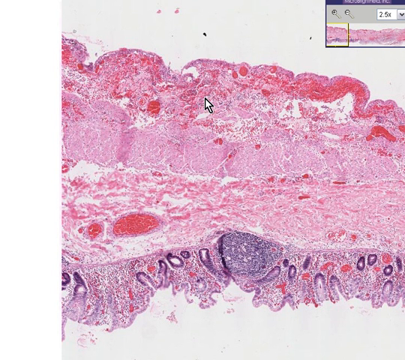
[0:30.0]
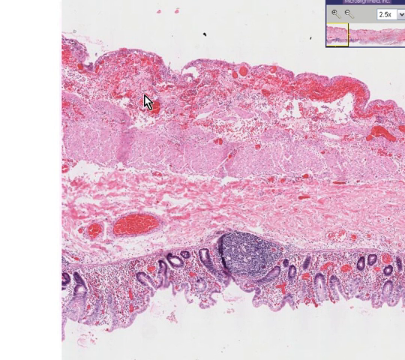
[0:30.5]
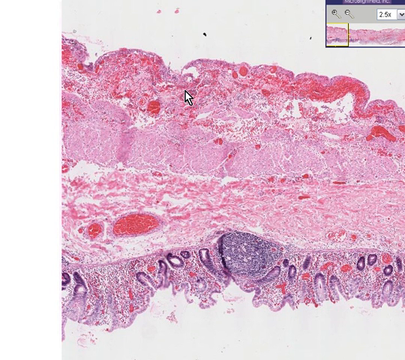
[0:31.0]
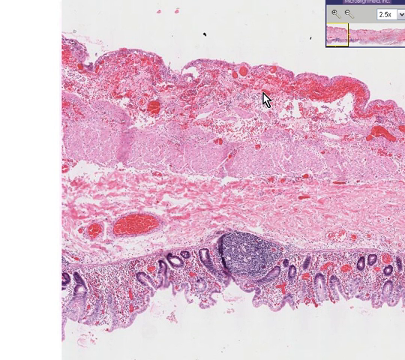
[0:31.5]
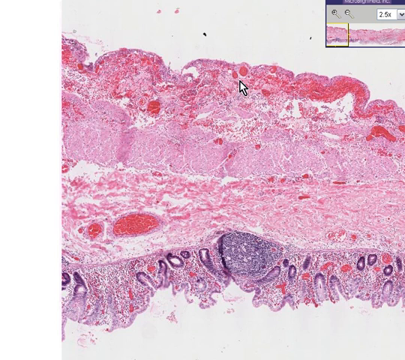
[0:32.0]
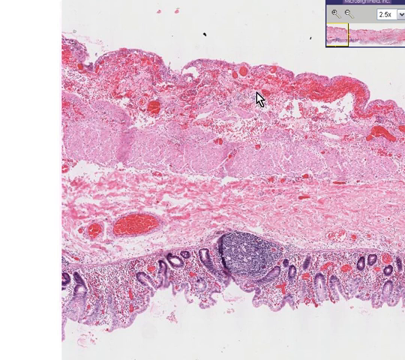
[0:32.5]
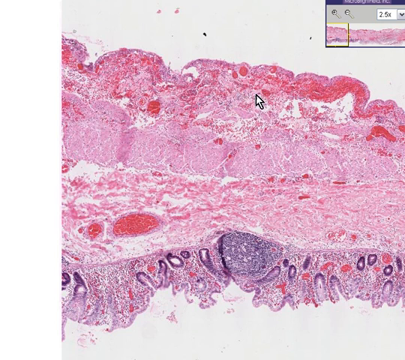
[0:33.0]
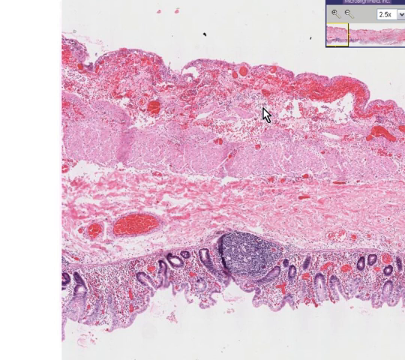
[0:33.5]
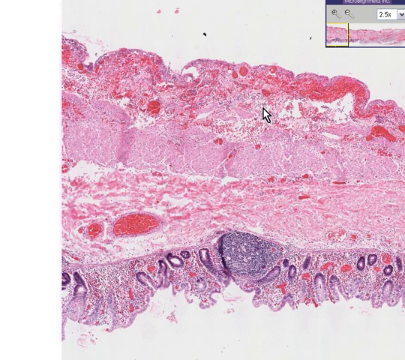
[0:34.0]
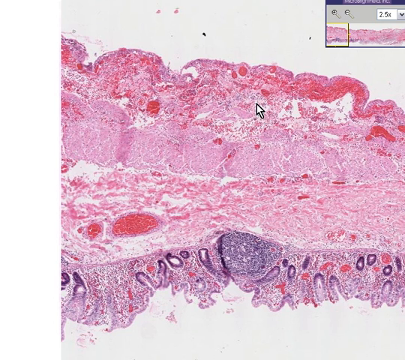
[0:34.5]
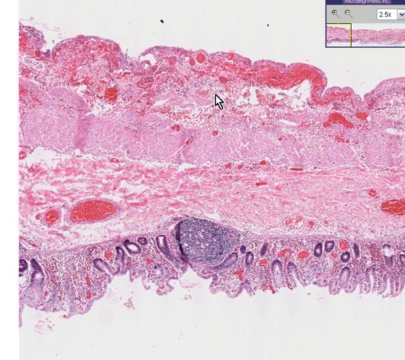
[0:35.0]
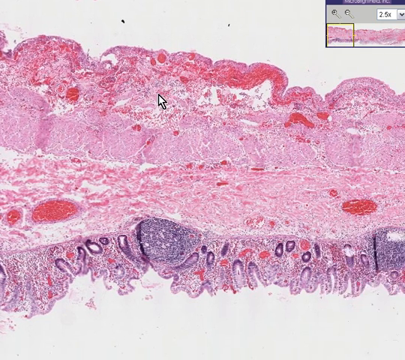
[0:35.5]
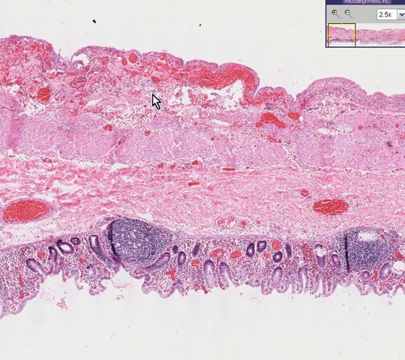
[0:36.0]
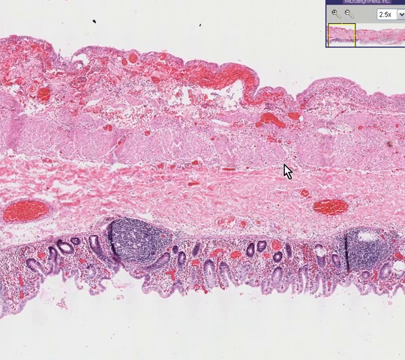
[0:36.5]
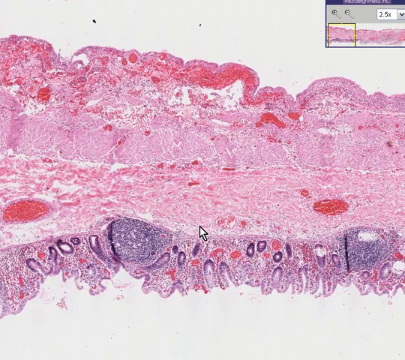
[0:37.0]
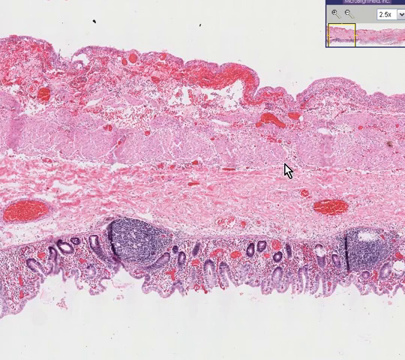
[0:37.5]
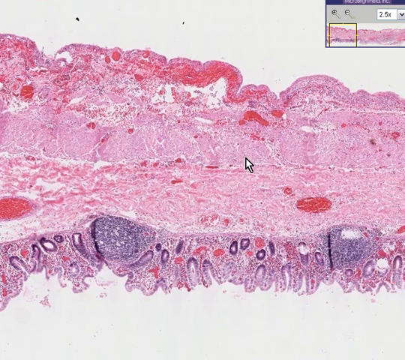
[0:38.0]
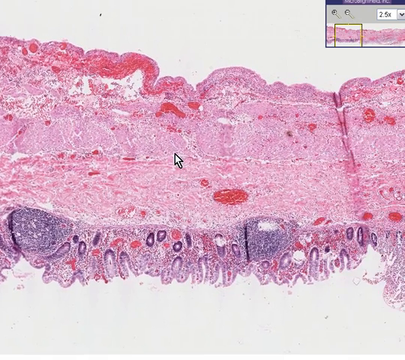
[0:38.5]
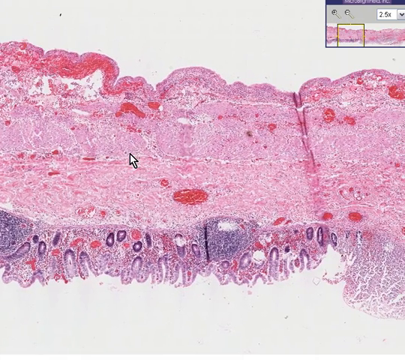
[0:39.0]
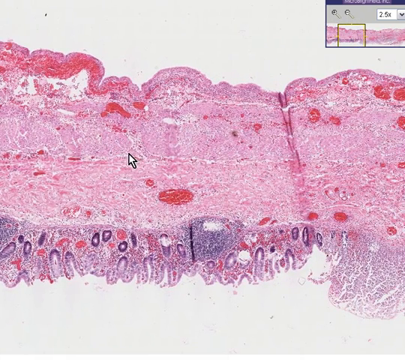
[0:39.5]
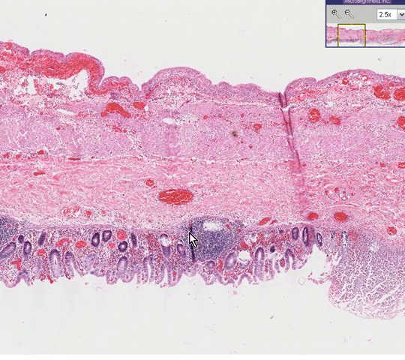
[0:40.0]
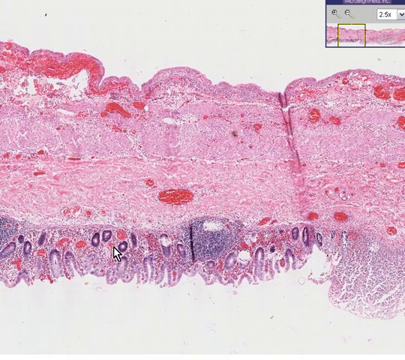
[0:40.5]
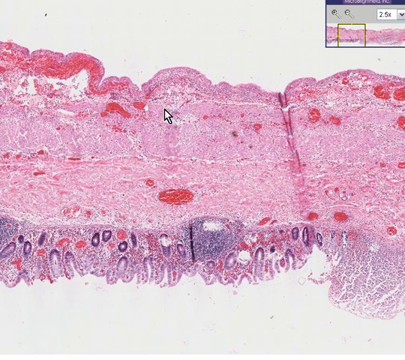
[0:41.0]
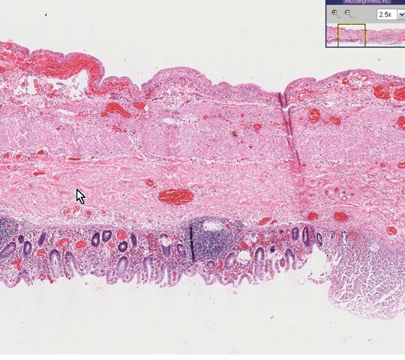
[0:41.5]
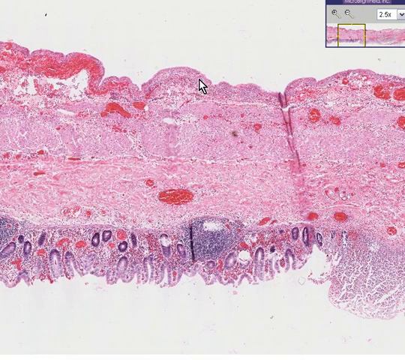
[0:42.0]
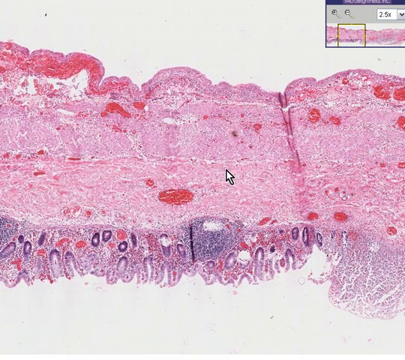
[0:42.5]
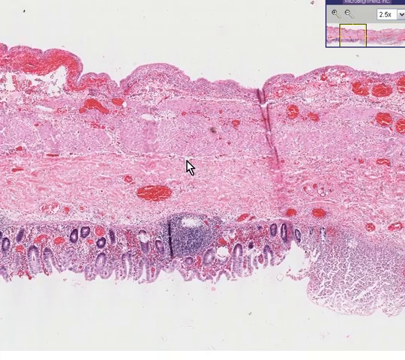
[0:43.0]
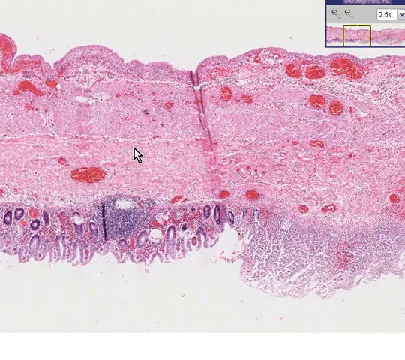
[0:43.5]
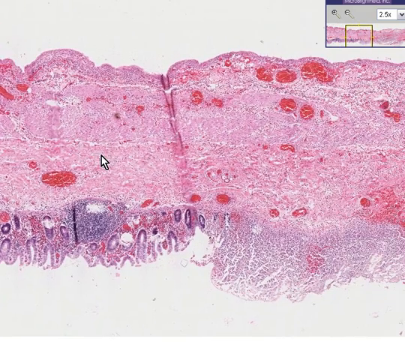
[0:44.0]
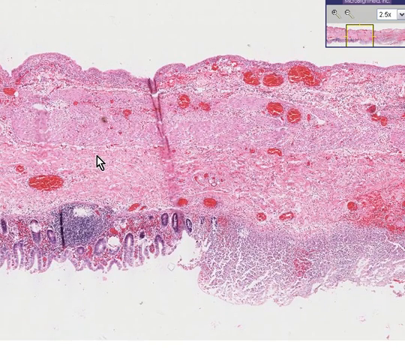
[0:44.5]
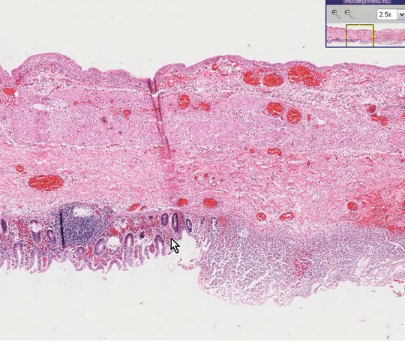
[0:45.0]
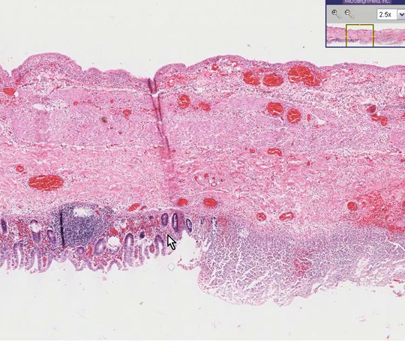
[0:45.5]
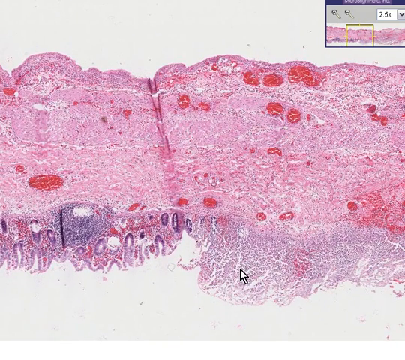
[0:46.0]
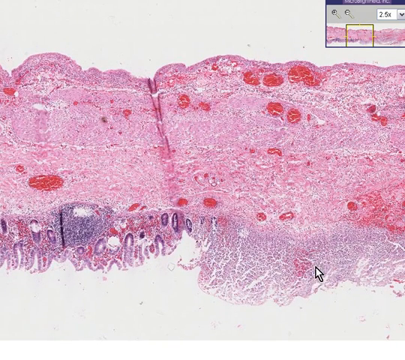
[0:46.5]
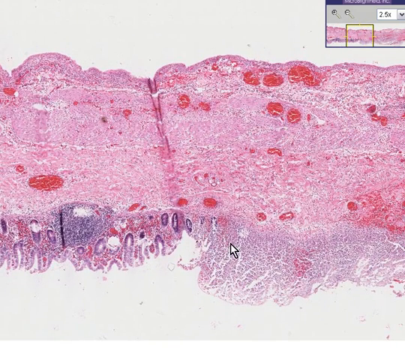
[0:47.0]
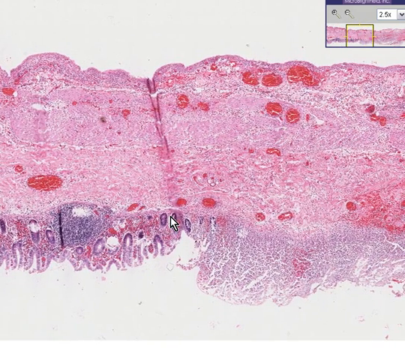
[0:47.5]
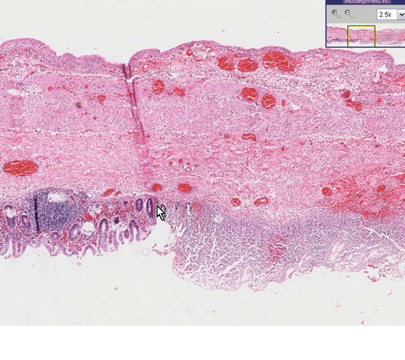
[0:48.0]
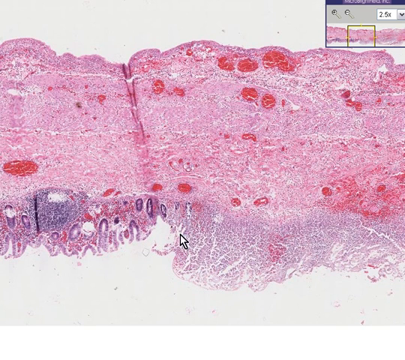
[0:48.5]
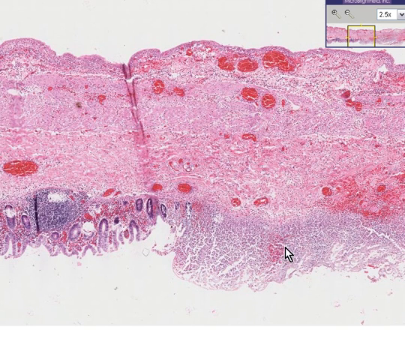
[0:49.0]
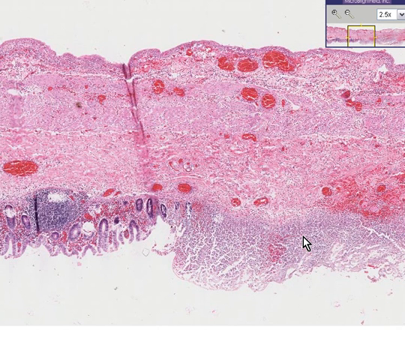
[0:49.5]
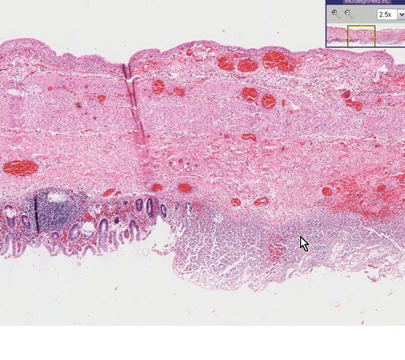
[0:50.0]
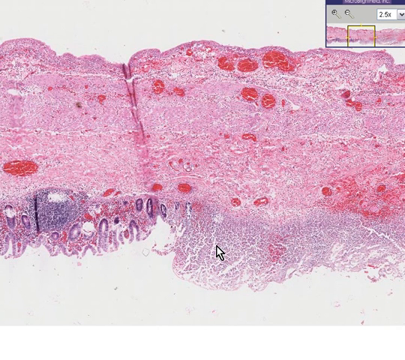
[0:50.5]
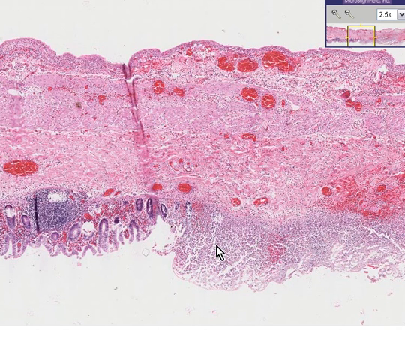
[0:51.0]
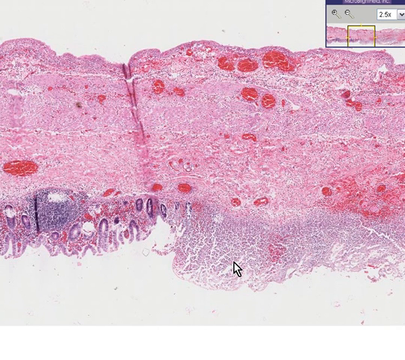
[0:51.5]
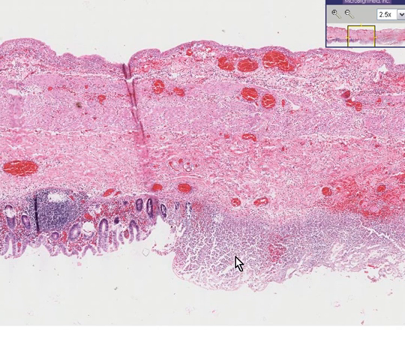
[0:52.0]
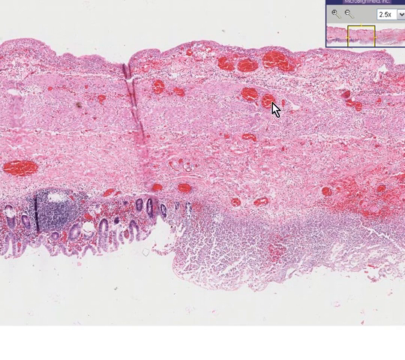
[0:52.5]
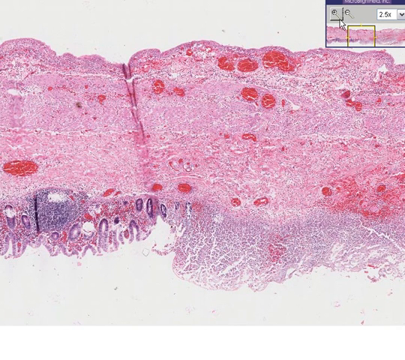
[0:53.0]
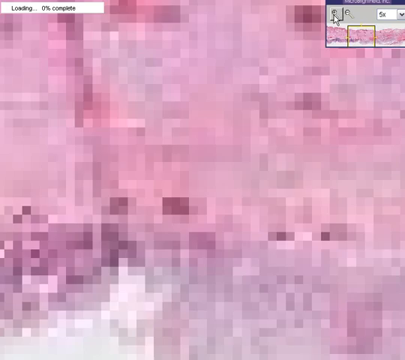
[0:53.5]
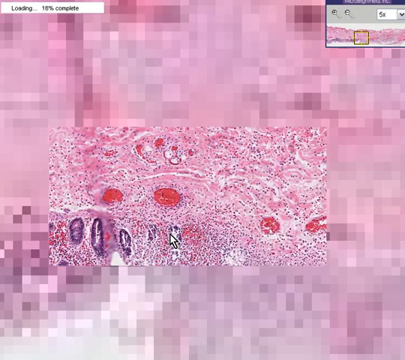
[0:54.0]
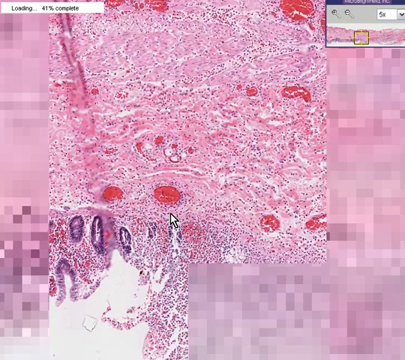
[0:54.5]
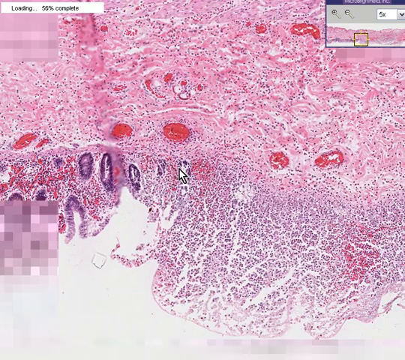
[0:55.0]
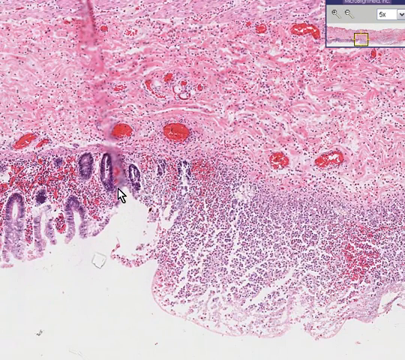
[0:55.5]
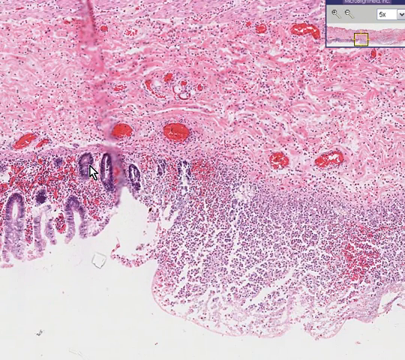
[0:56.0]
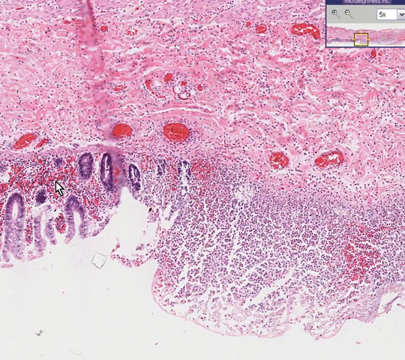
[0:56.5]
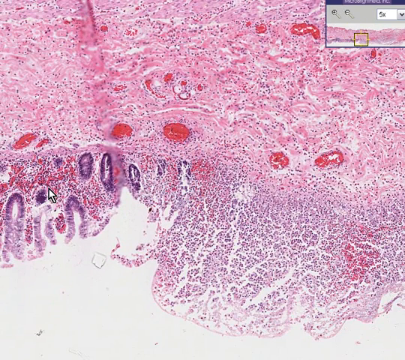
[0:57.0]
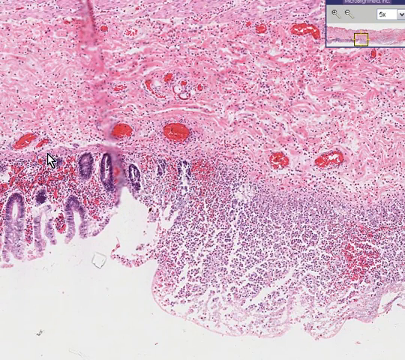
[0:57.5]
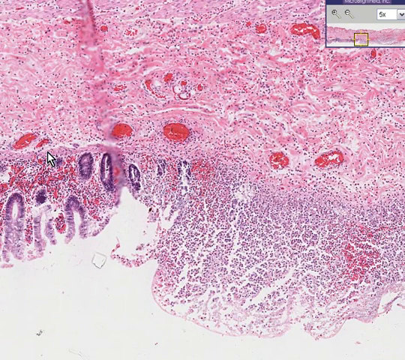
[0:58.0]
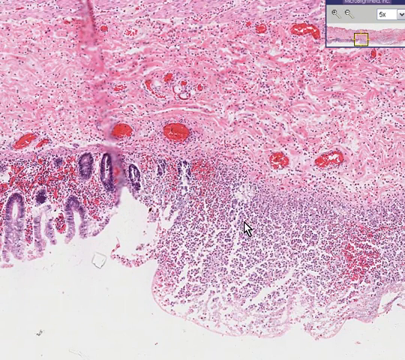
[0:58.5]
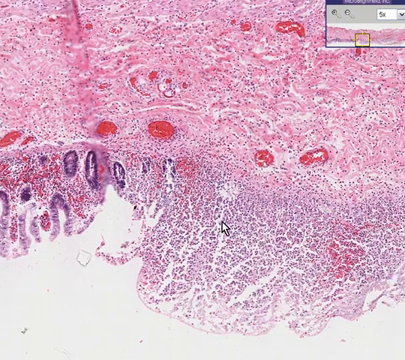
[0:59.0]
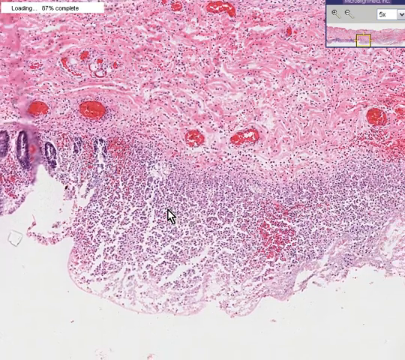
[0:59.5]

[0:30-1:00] The screen shows a mass of pink and purple that looks like it may be a slice of some sort of tissue, or a diagram or something painted. At the top right of the screen, a smaller window reads "2.5 X" and shows the same image as the larger part of the screen, with a line on it. The cursor moves toward the top of the structure, pointing at little dark pink spots, then moves the slice over again and makes a circular motion. It then shows purple and pink things at the bottom that sort of look like roots, or as if the image has been faded out. The cursor clicks on the smaller window at the top, enlarging the image, and goes down to show little circular purple things. The view is moved over again.